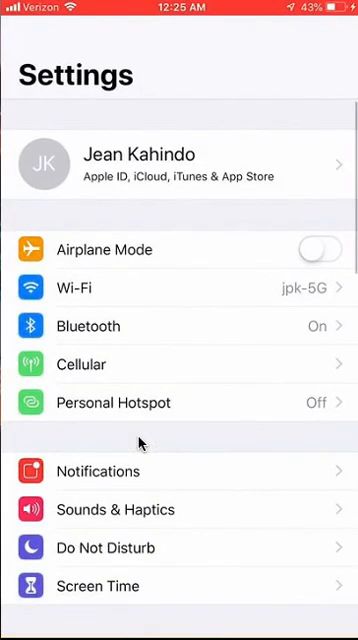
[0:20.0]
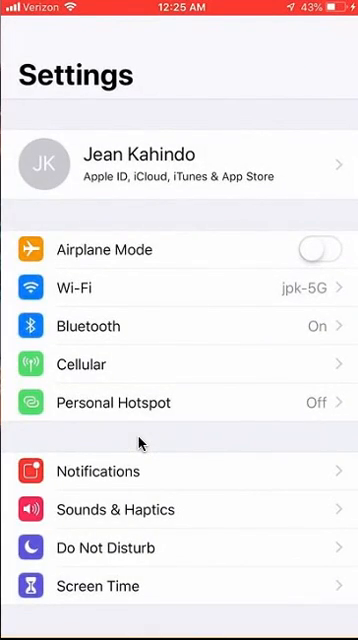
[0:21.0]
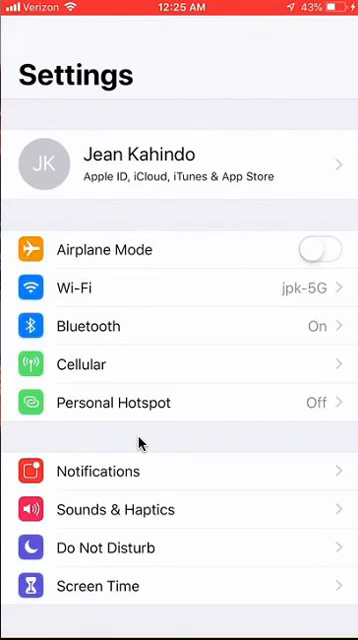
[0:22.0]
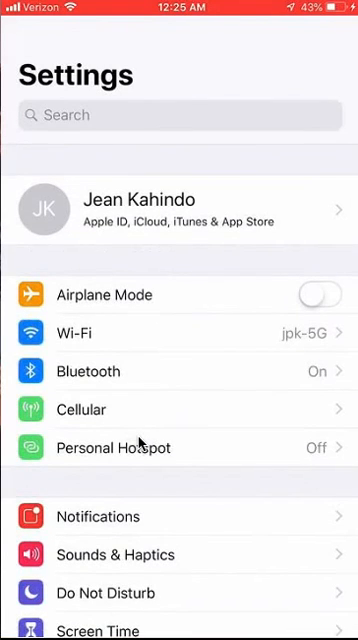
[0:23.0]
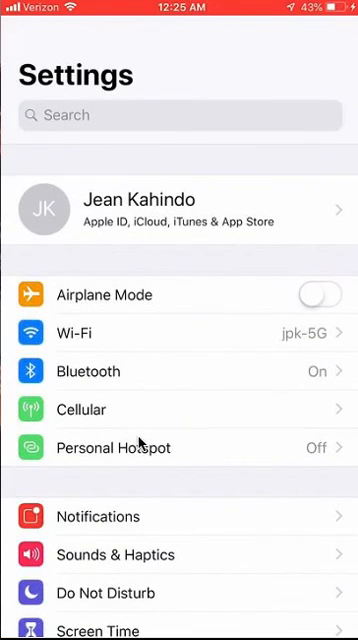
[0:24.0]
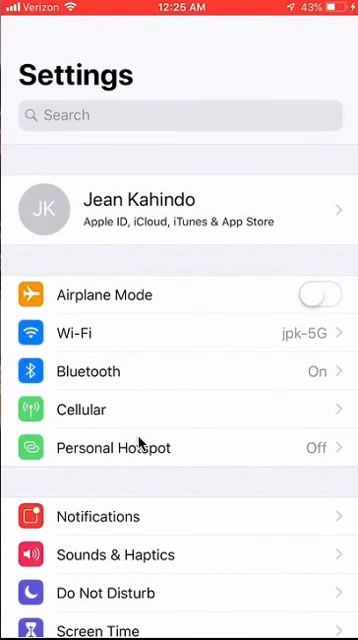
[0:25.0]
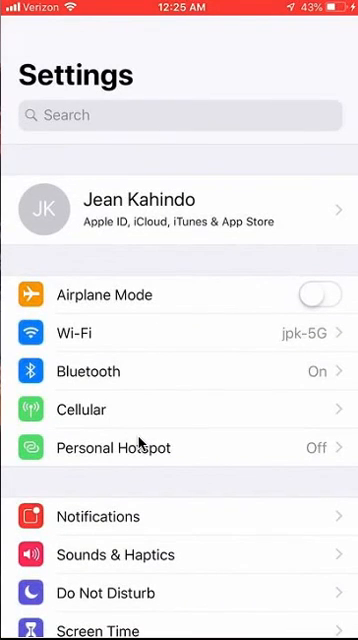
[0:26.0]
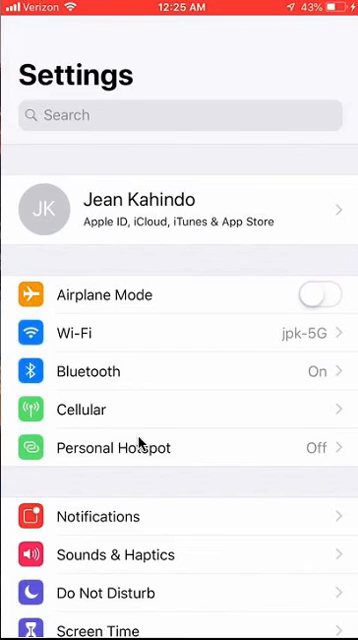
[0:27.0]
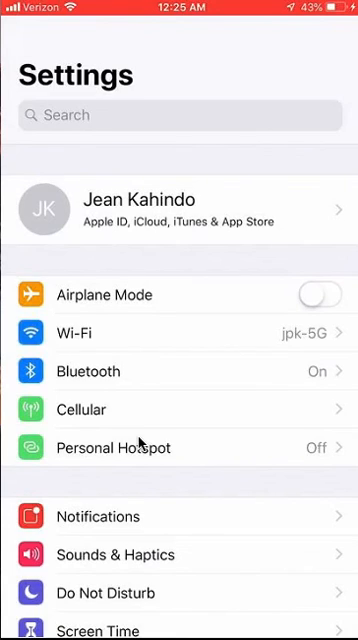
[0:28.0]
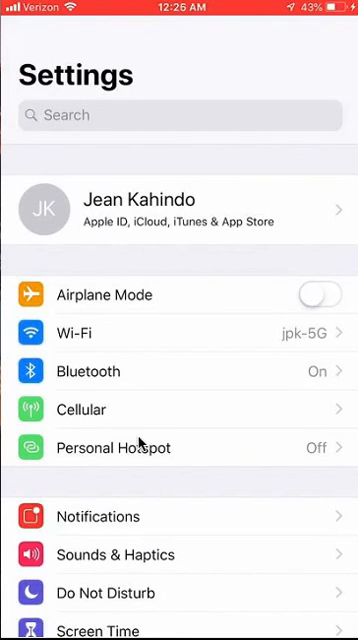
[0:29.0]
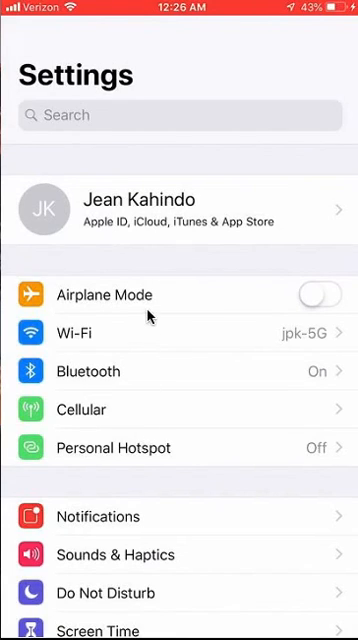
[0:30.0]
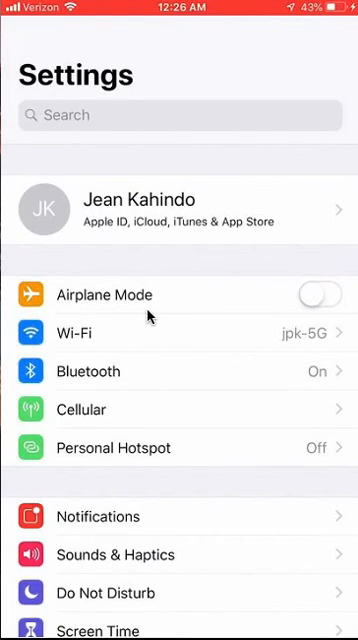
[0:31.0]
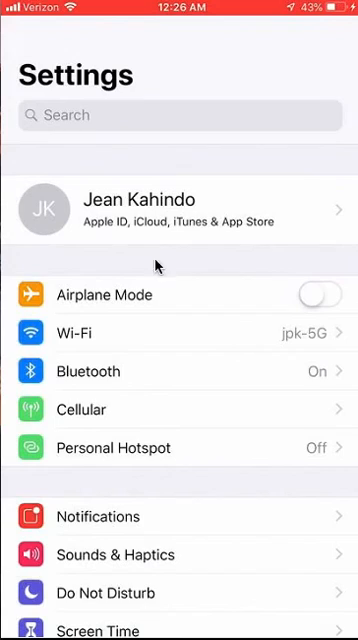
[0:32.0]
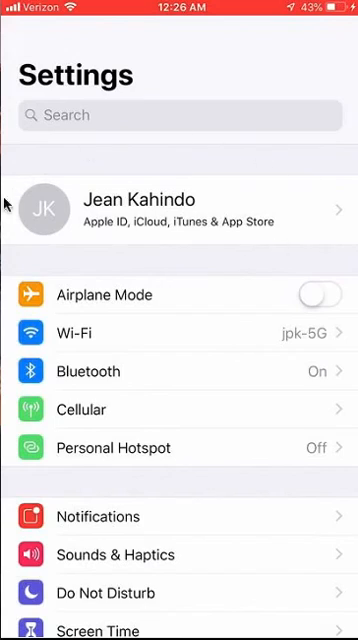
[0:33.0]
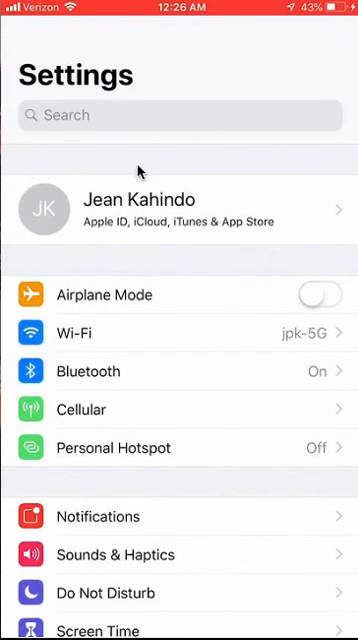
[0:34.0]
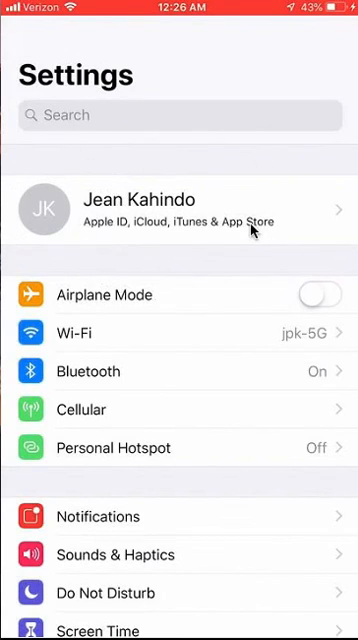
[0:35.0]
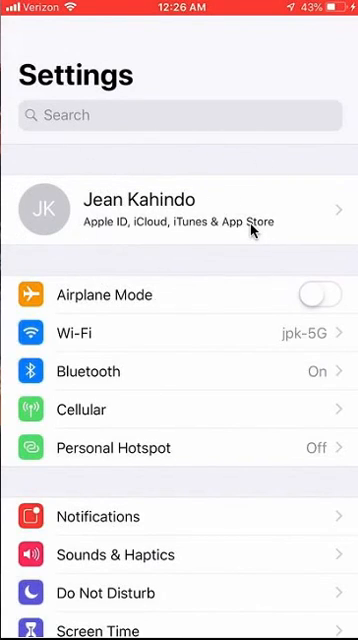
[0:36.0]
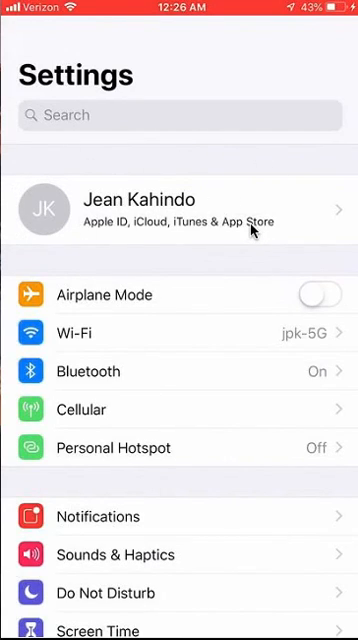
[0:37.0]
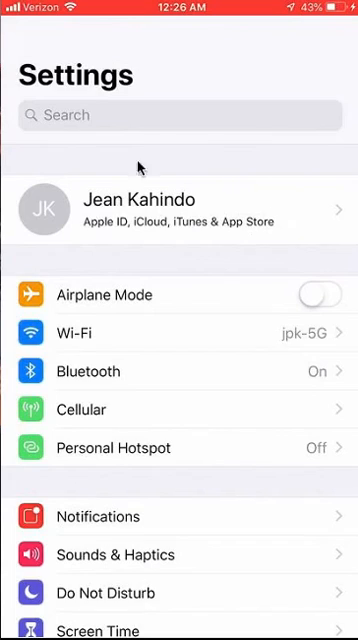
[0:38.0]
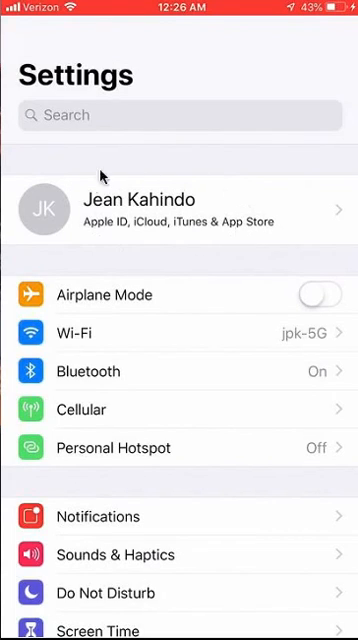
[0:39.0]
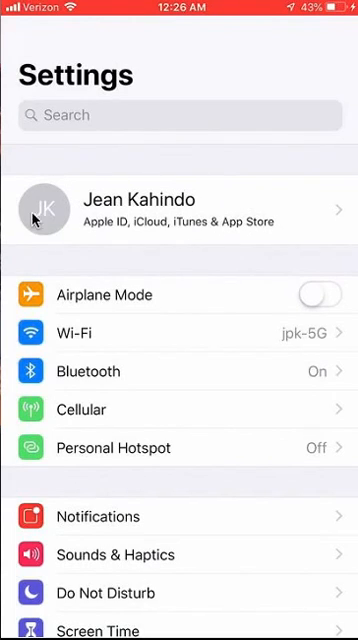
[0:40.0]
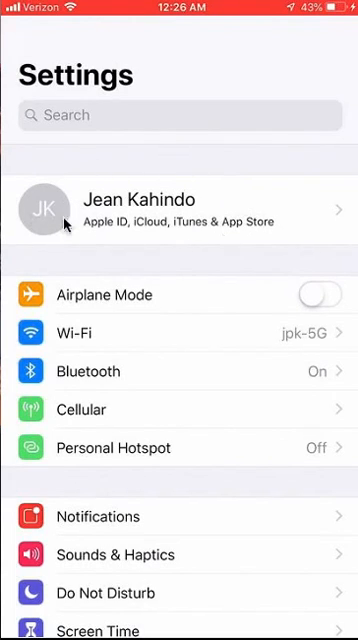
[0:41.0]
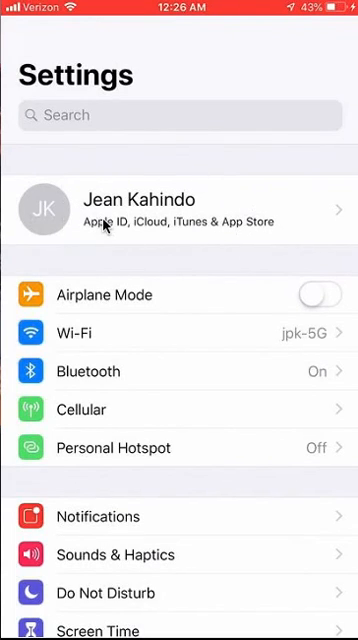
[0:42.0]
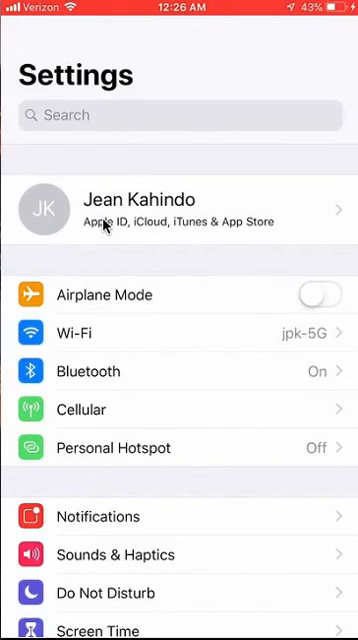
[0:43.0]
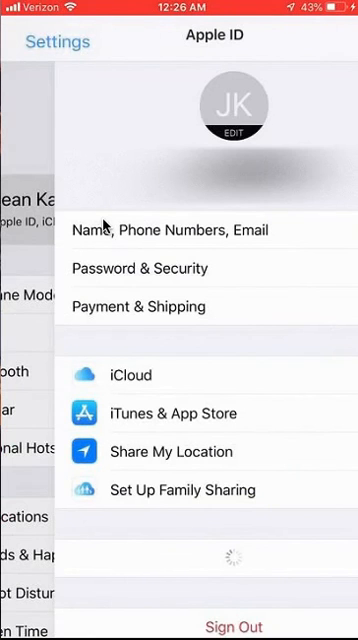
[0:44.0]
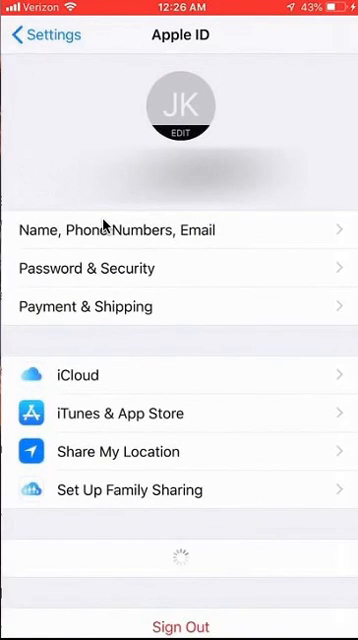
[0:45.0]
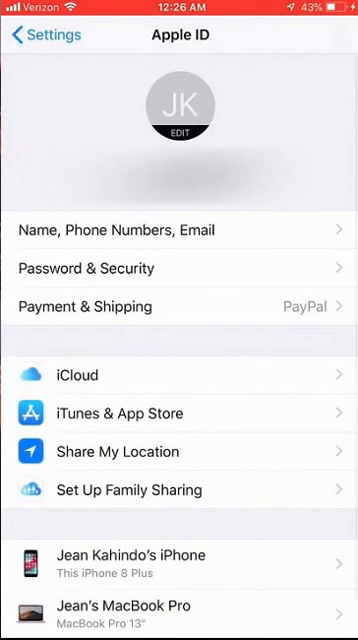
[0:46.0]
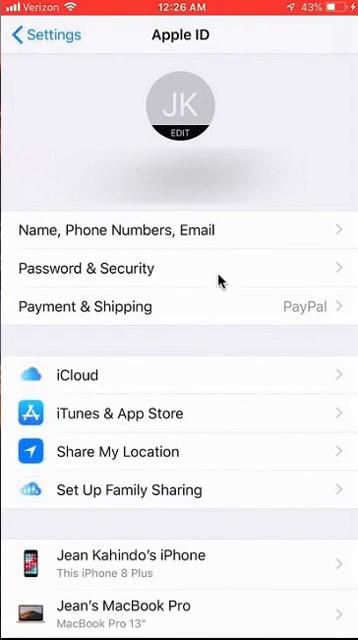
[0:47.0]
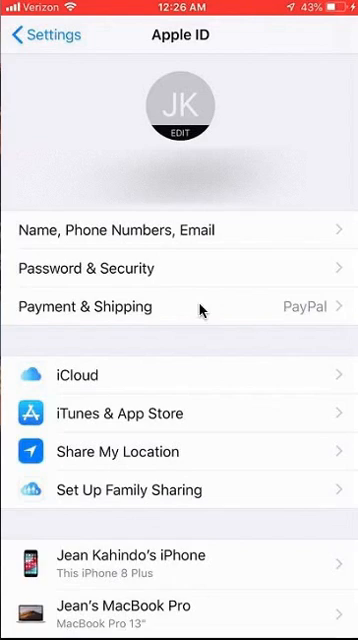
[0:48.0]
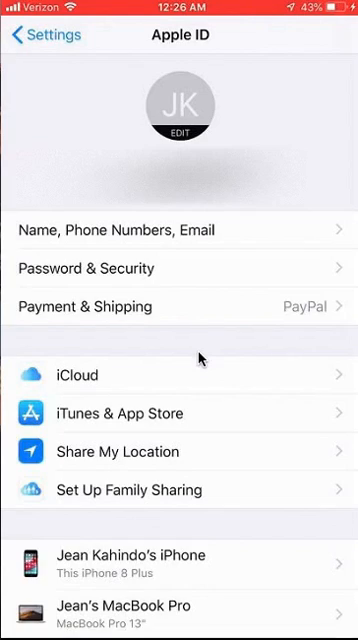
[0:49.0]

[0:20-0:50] In the settings app, the top of the page shows the owner's name, Jean Cajindo, with Apple ID, iCloud, iTunes, and App Store below it, followed by airplane mode, Bluetooth, cellular, personal hotspot, notifications, sound haptics and screen time. The person circles around Jeanne Cahindo at the top where it says Apple ID, iCloud, iTunes, and App Store, and clicks into it. The Apple ID page opens with the initials JK at the top. Below that are name, phone numbers, email, password, security, payment and shipping, iCloud, iTunes, and App Store, share my location, set up my sharing, Jeanne Cahindo's iPhone, this iPhone 8 Plus, and Jeanne's MacBook Pro.